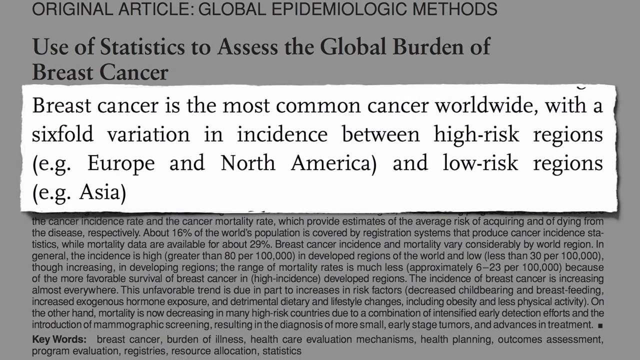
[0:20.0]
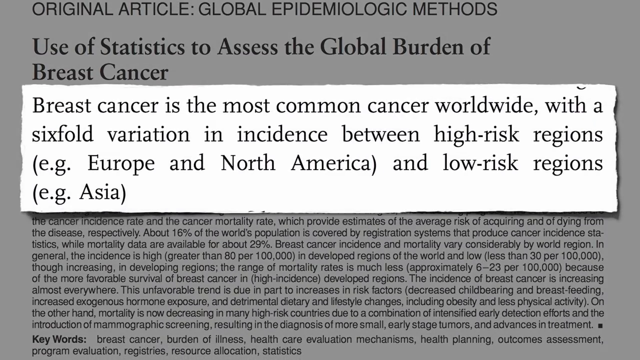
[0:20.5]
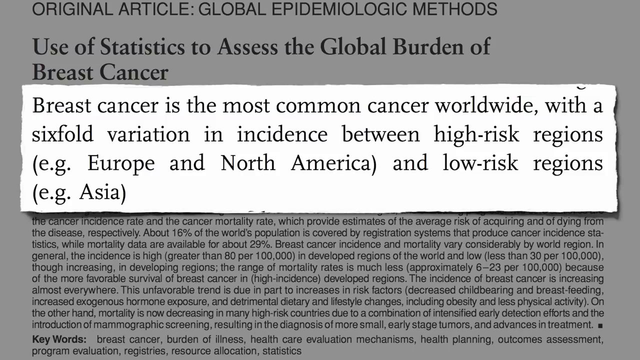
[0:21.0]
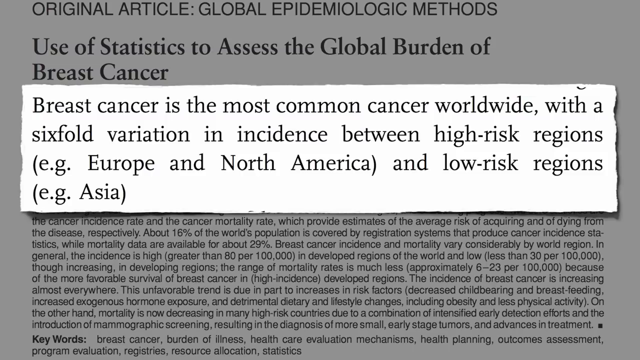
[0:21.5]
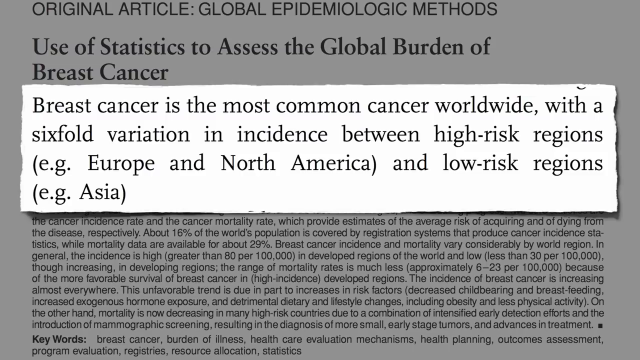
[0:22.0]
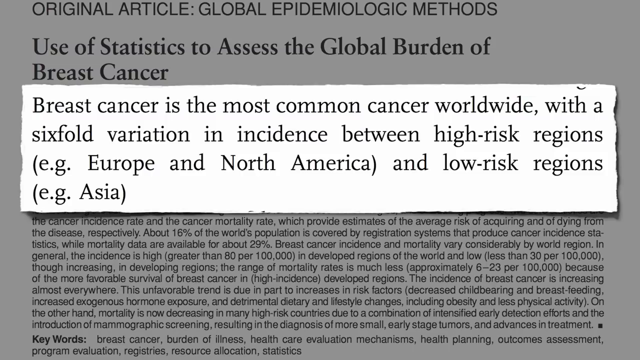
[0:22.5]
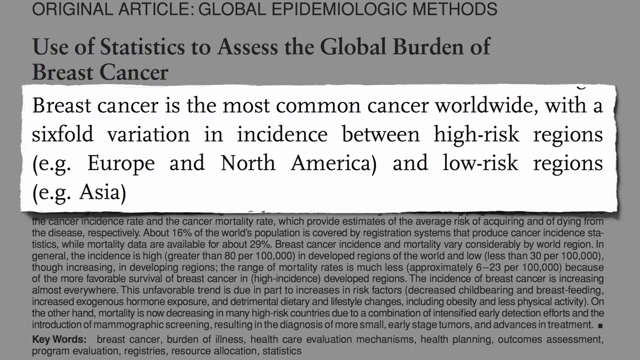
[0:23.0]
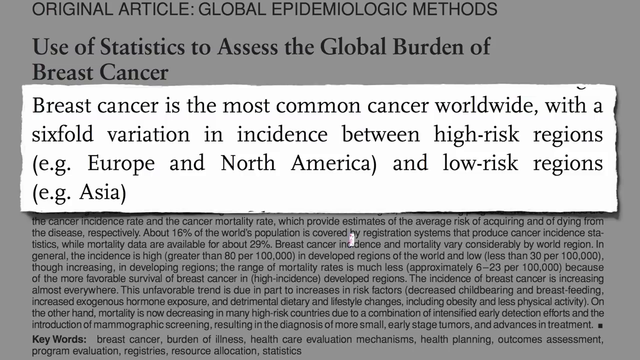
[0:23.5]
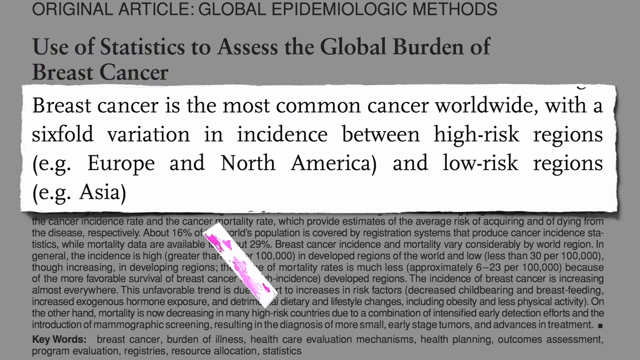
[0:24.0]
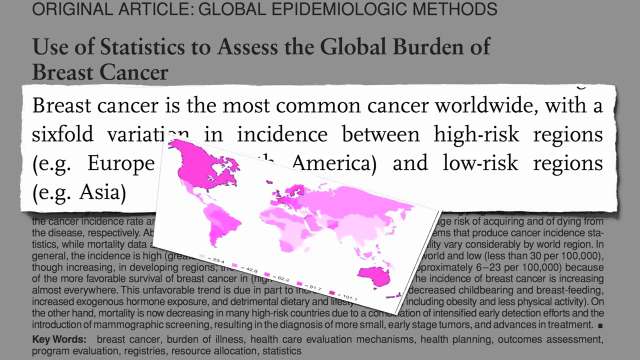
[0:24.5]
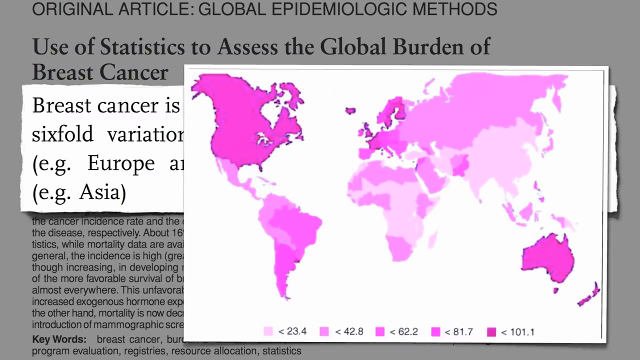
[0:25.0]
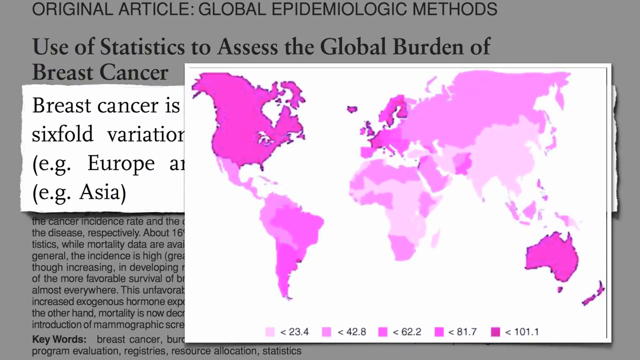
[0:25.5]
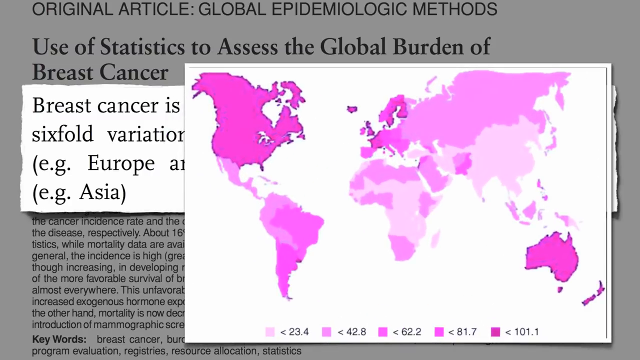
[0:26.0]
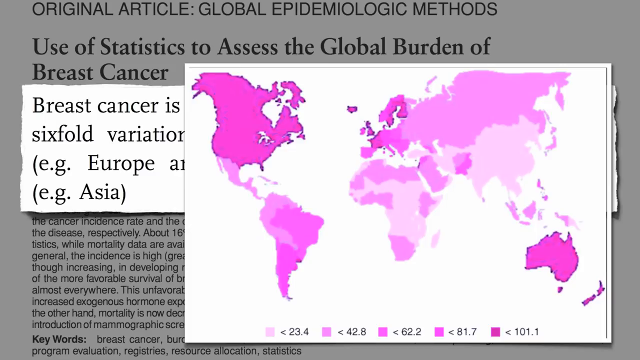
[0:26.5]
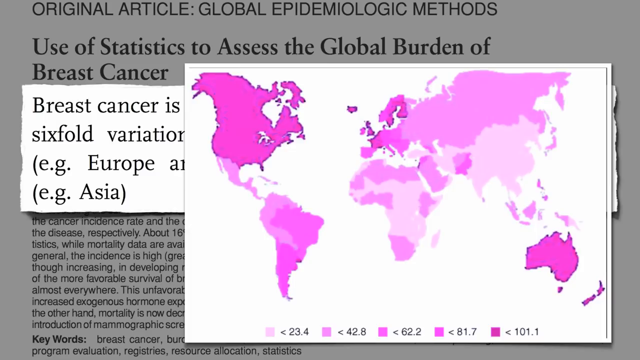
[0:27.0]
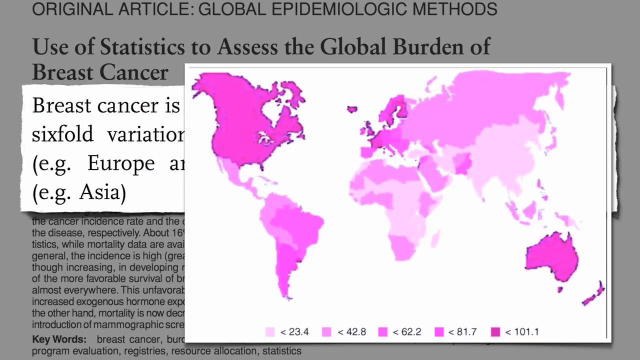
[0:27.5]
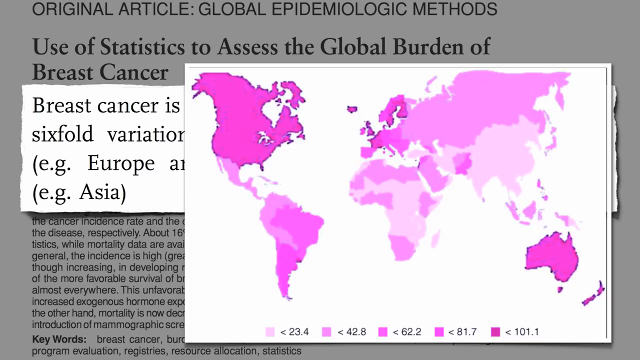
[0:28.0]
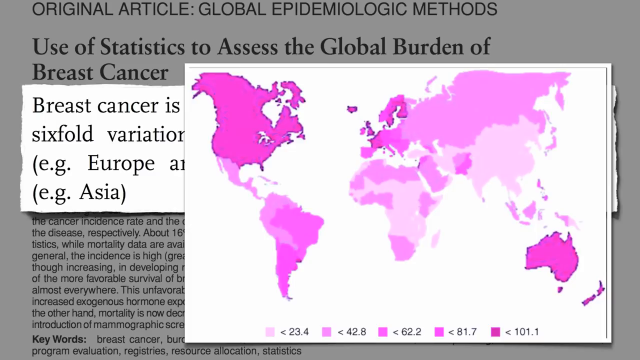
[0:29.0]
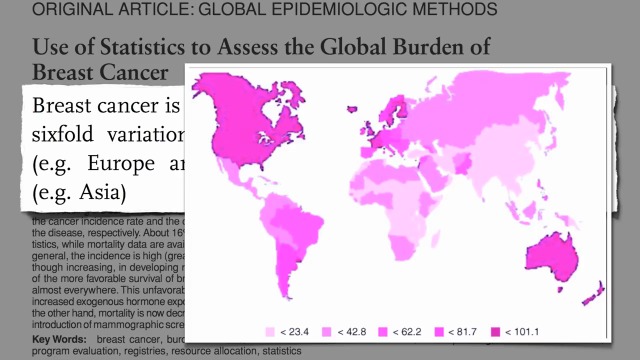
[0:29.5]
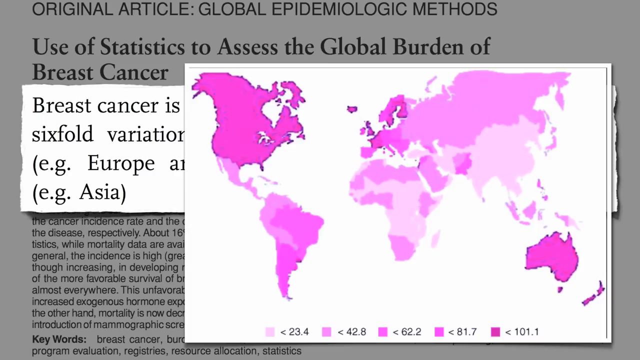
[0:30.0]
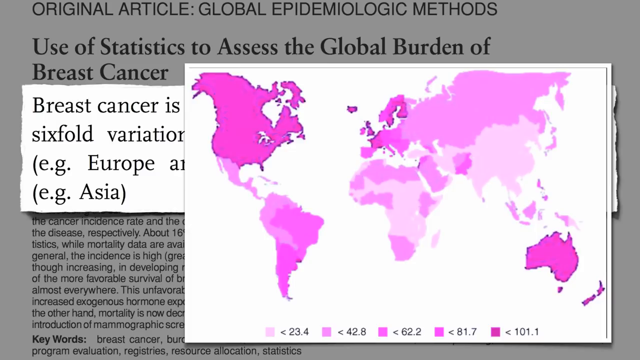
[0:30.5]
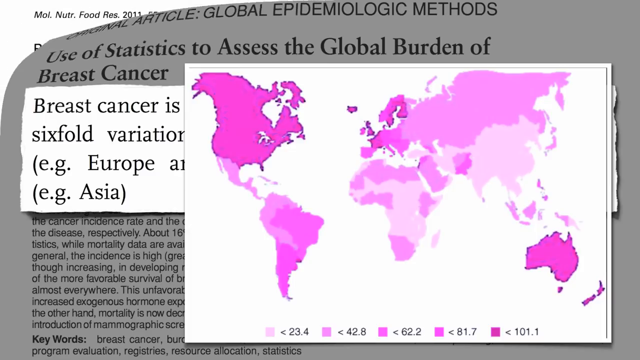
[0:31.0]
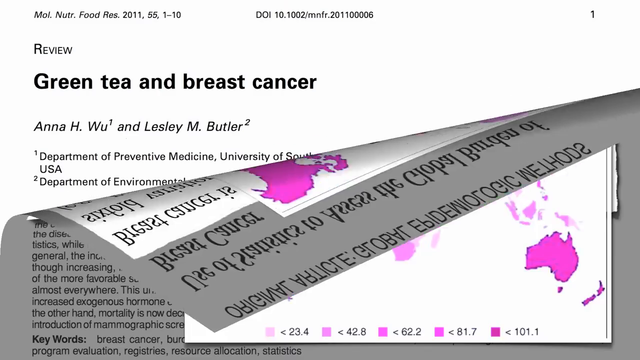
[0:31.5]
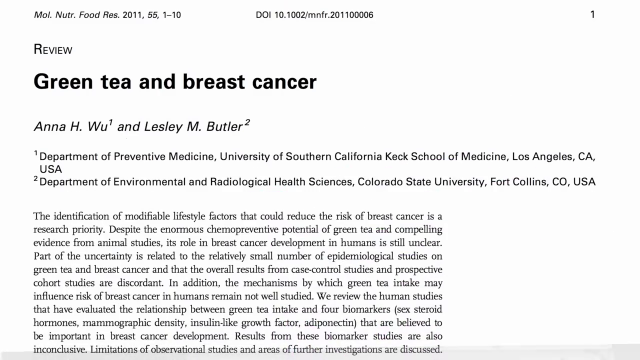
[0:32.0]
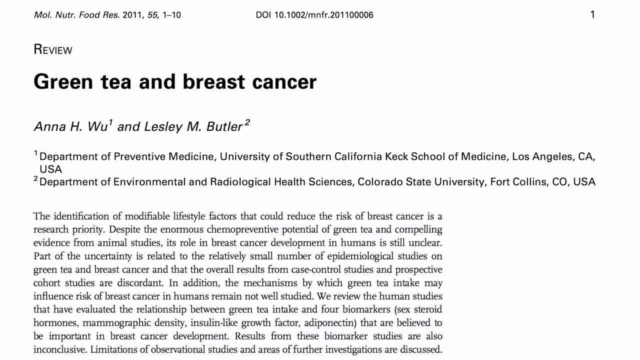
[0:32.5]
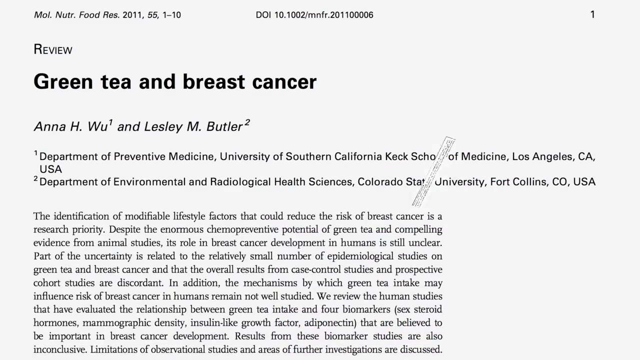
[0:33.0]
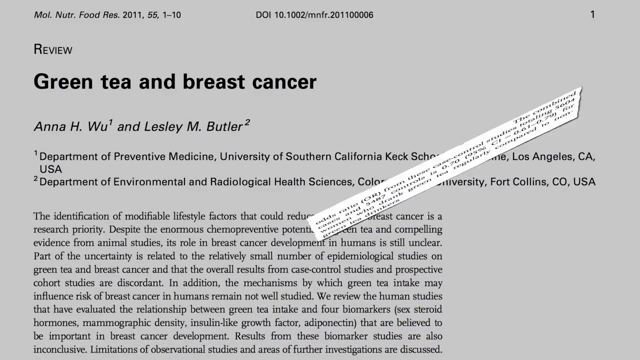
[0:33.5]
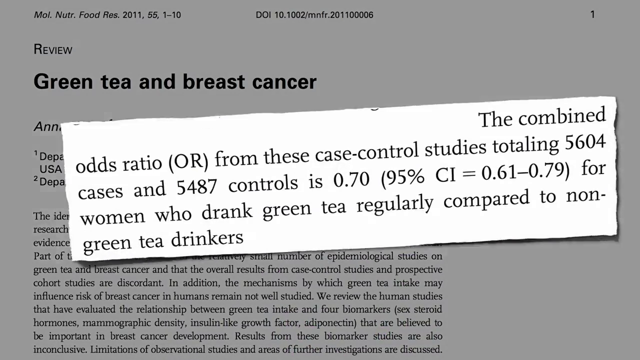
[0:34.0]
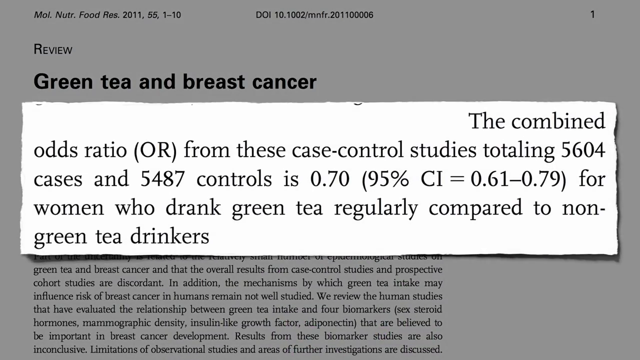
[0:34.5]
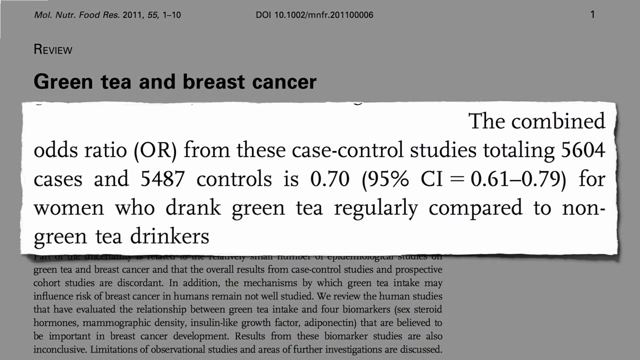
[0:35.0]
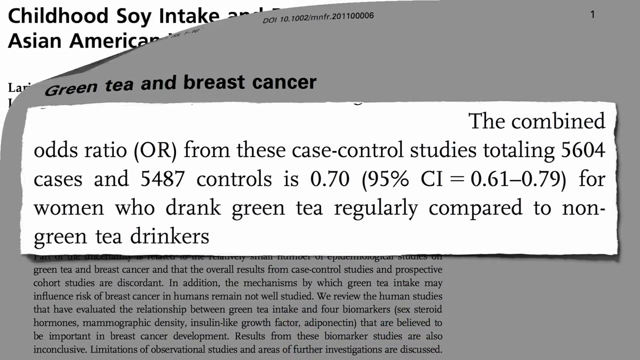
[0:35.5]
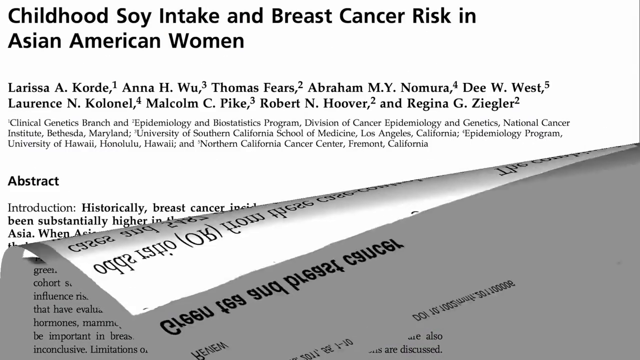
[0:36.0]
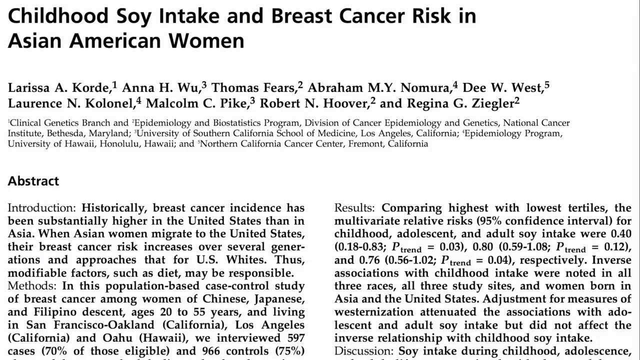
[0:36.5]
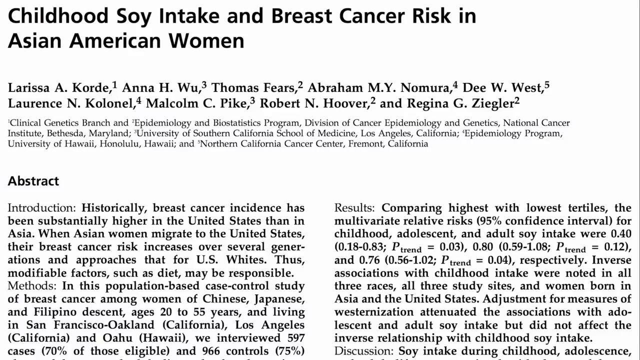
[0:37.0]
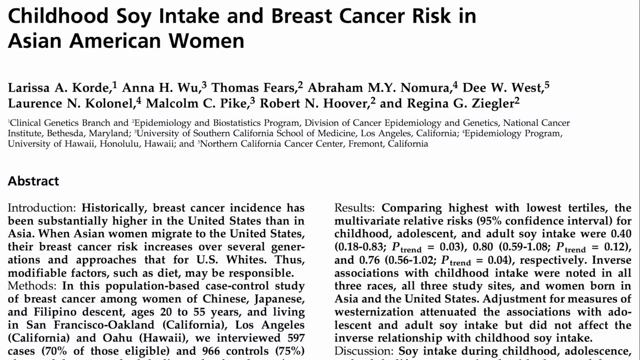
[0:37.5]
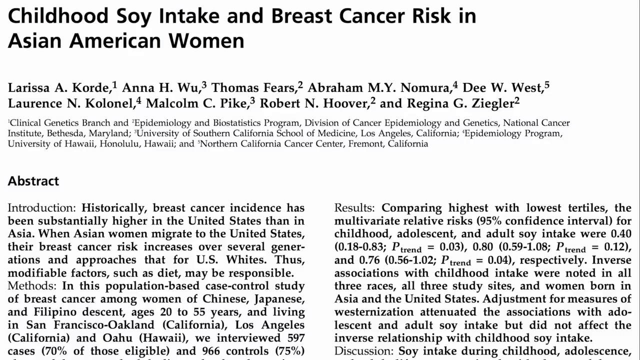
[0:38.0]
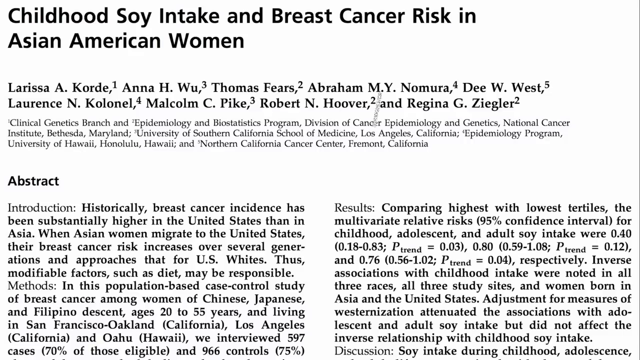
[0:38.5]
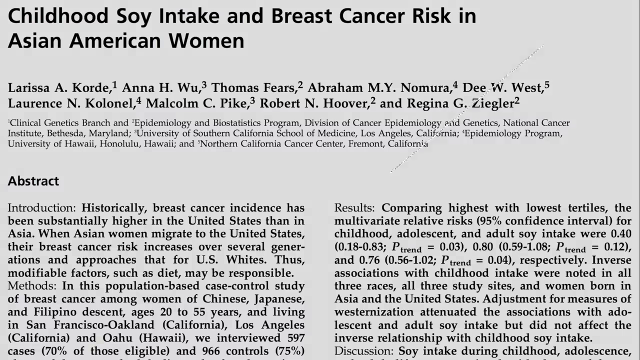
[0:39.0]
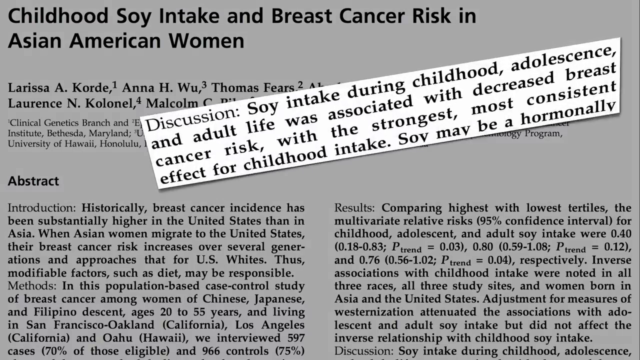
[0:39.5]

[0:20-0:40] The white background shows the article "Original Article Global Epidemiological Methods, Use of Statistics to Assess the Global Burden of Breast Cancer", and overlapping the authors in a brighter white rectangle is a highlighted section that says "Breast cancer is the most common cancer worldwide with a six-fold variation incidence between high-risk regions, e.g. Europe and North America, and low-risk regions, e.g. Asia." After a few seconds, a white square with purple on it flips from the middle of the screen and moves towards the middle right, covering about 80% of the screen. It seems to be a global map with values that are not clearly labeled but separated by colors, highlighted across different regions of the world, with values corresponding to each color at the bottom. A page turn animation from the top left-hand corner down then changes to another article, a review of green tea and breast cancer. Two authors are listed underneath along with where they work, the article is in black text on the lower left side of the page, and it is shown to be the nutrition food res 2011 article. In another partial transition from the upper right side of the screen, a white rectangle with a black border enlarges and moves over the authors section of the underlying page; its black text says "the combined odds ratio OR from these case control studies totaling 5604 cases and 5487 controls is 0.70. 95% CL equals 0.61 to 0.79 for women who drank green tea regularly compared to non-green tea drinkers". Another page turn transition starts at the top left-hand corner and moves down, turning to an article that says "childhood, soy intake, and breast cancer risk in Asian American women". A list of all the authors and where they work follows, and underneath them the abstract in black text is split into two columns, with the introduction on the left and the results on the right. In another partial transition from the upper right side of the screen, a small white rectangle moves and enlarges over the authors section, with black text saying "Discussion. Soy intake during childhood, adolescence, and adult life was associated with decreased breast cancer risk, with the strongest, most consistent effect for childhood intake. Soy may be a hormonal aid." The text then ends.